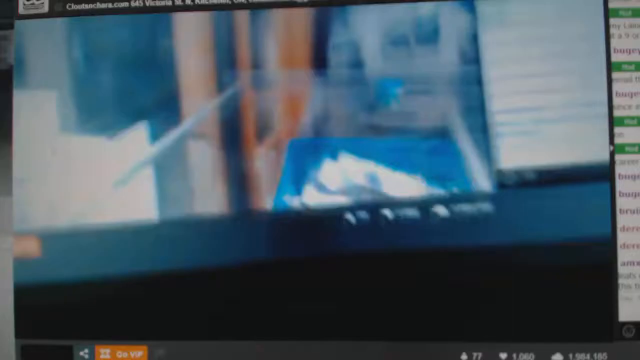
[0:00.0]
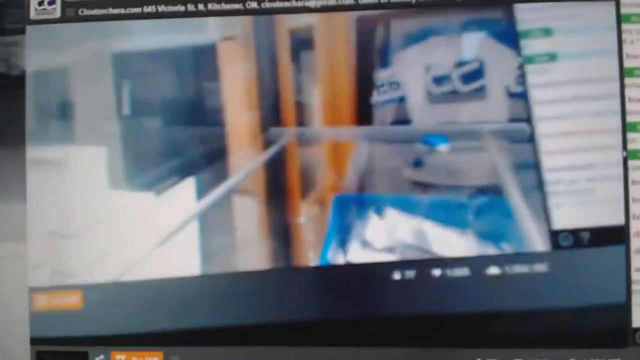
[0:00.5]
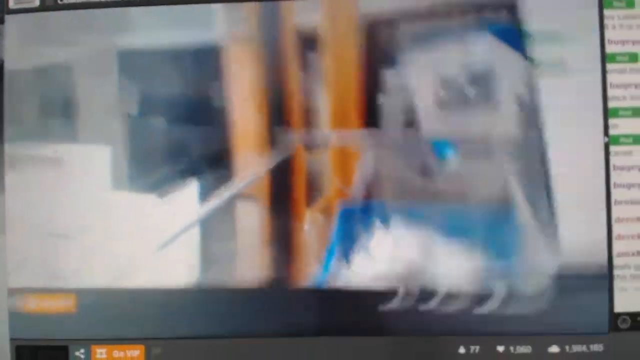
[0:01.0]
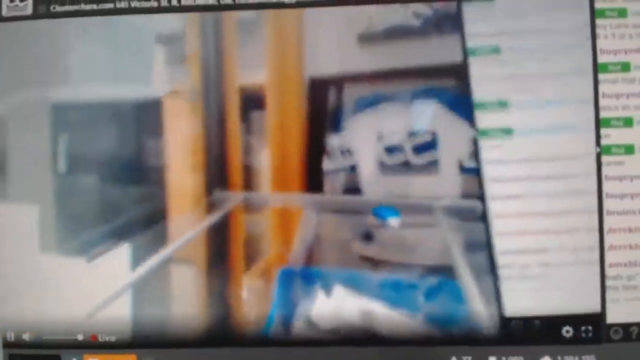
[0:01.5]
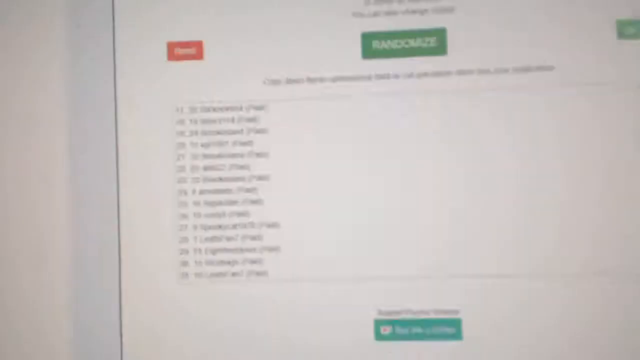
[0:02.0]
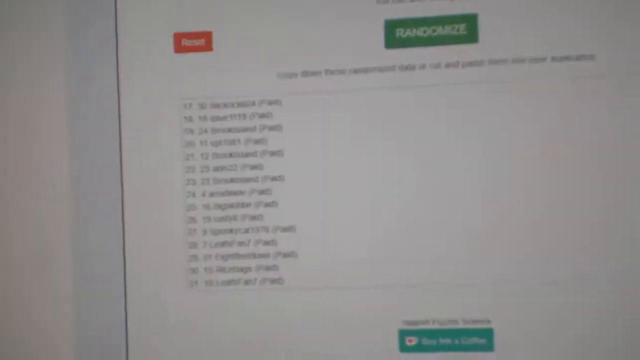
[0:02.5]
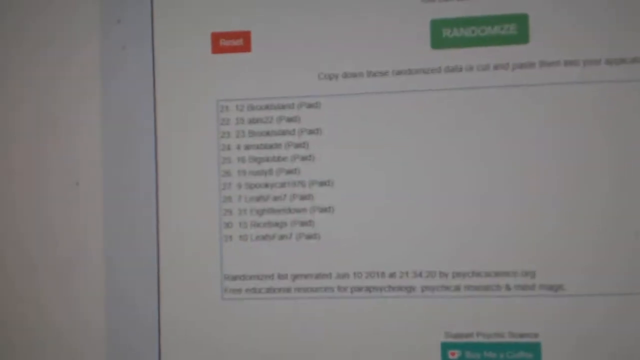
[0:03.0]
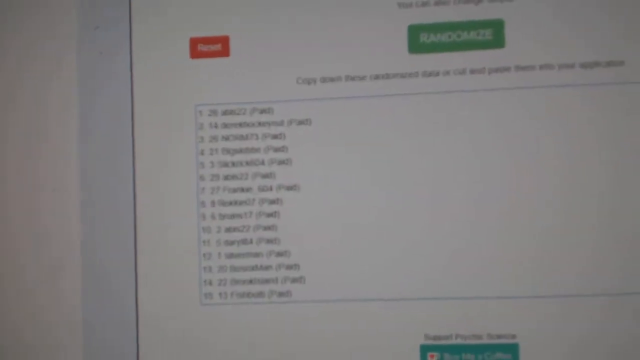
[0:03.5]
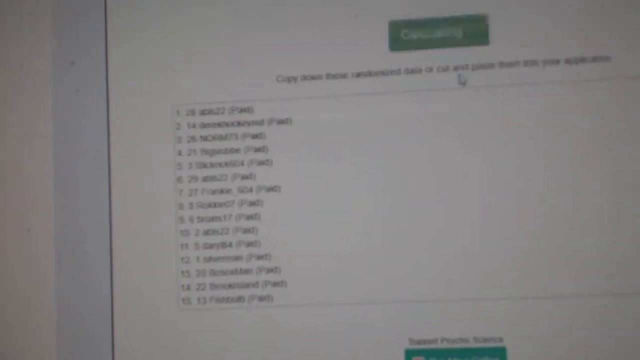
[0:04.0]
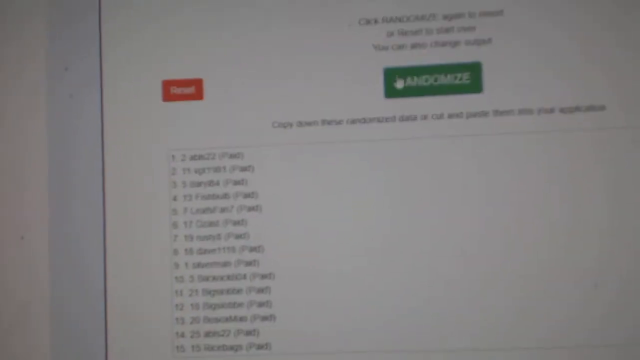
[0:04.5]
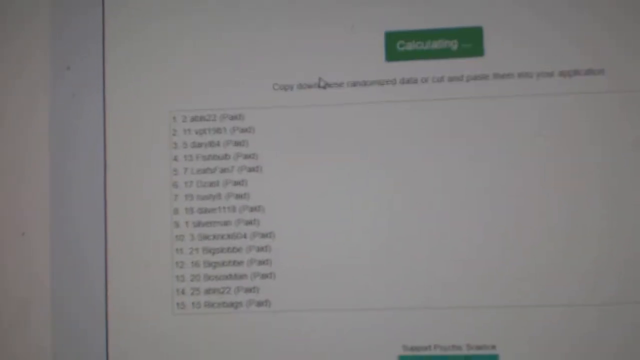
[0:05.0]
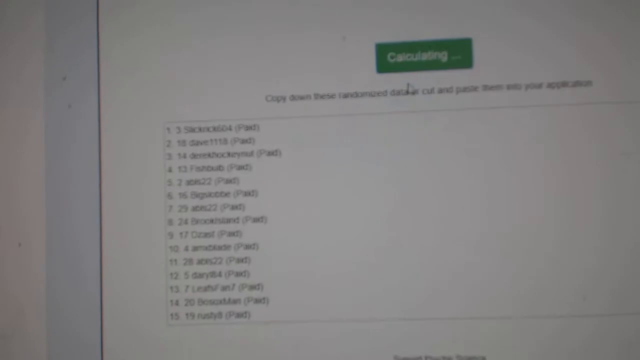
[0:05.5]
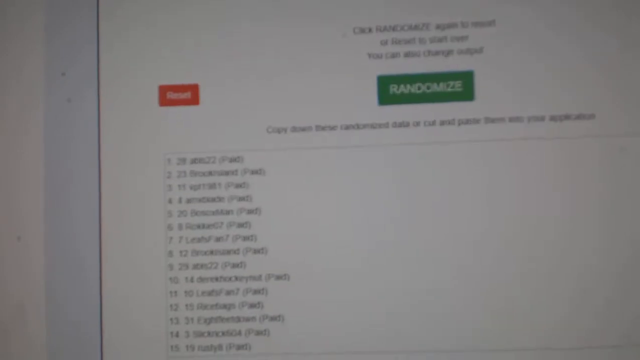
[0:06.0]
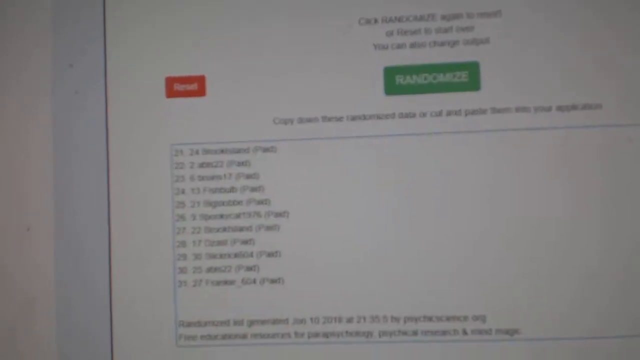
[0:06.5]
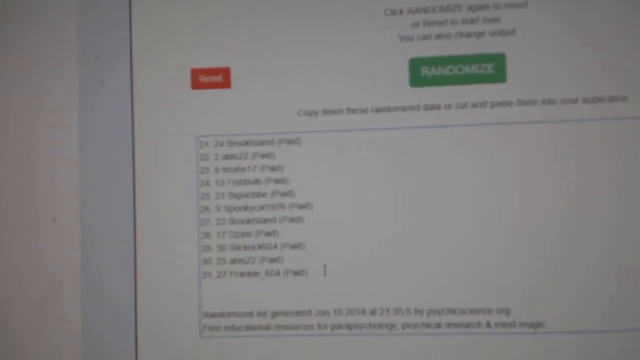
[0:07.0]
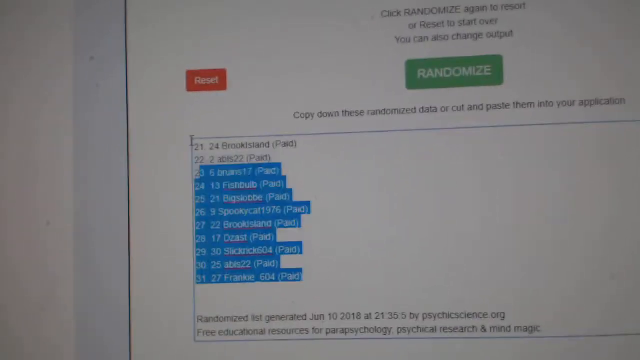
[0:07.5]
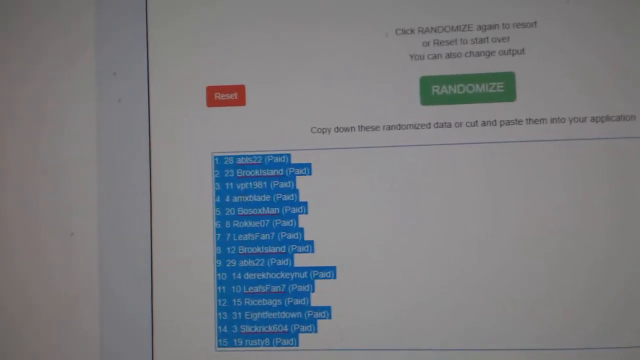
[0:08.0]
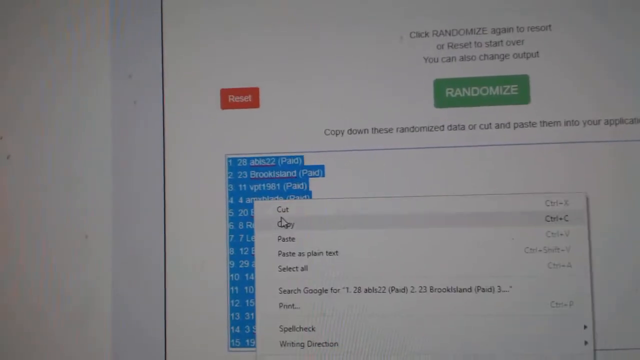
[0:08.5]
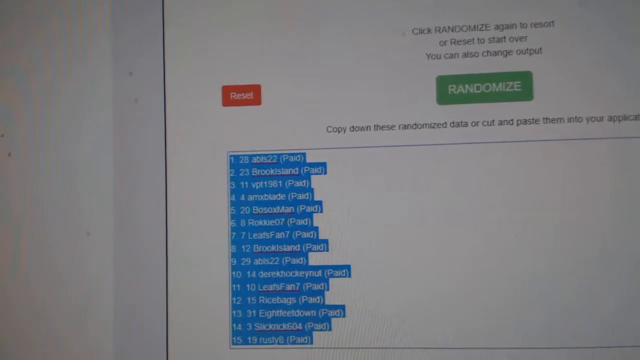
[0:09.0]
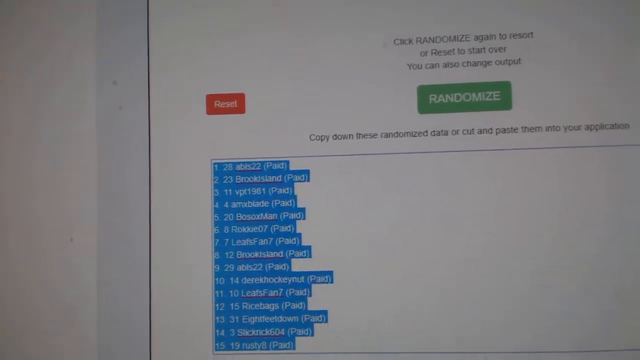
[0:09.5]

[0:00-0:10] A very shaky camera appears to be pointed at a computer screen and zooms in on what looks like a white box with a green button at the top. The image is very blurry and barely visible, but the green button appears to say "randomize". In the middle is a rectangular box containing a lot of text. On the left side is a red reset button. Above the green randomize button, black text reads "click randomize again to resort or reset to start over you can also change input", and underneath it text reads "copy these randomized data or cut them and paste them into your application". A white mouse cursor clicks the green randomize button three times, then highlights the whole list, which looks like a list numbered one through 15. It right-clicks, selects copy, and then goes into what looks like a spreadsheet.